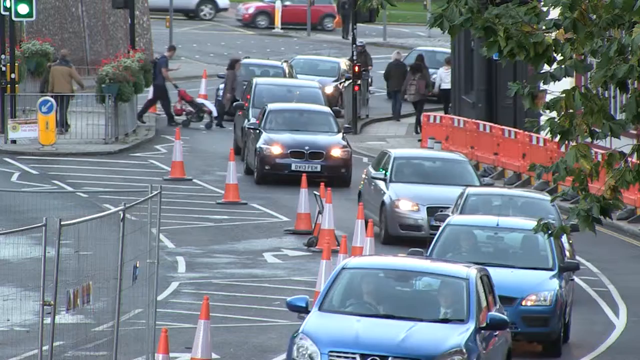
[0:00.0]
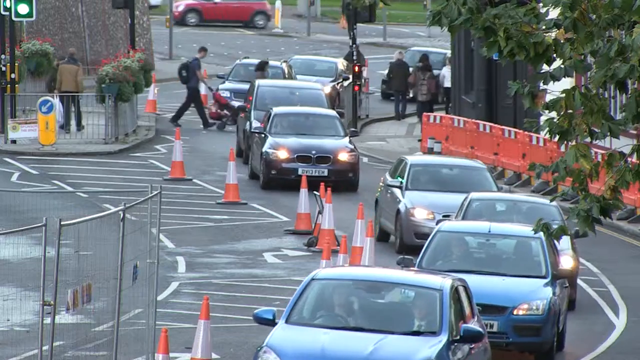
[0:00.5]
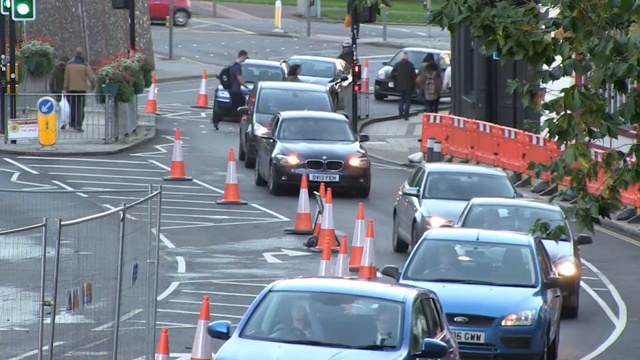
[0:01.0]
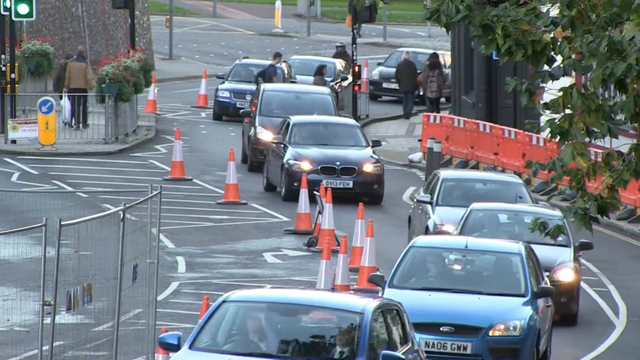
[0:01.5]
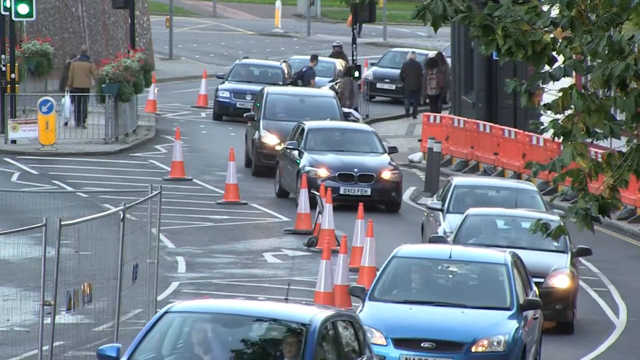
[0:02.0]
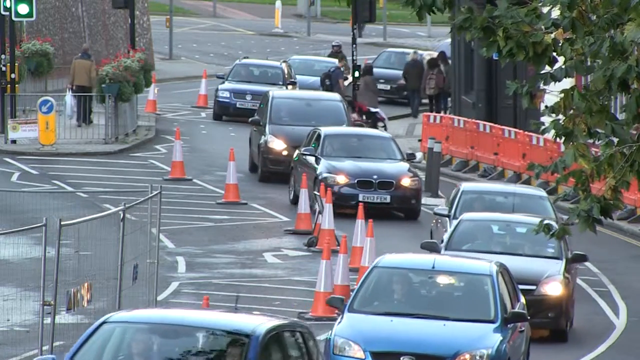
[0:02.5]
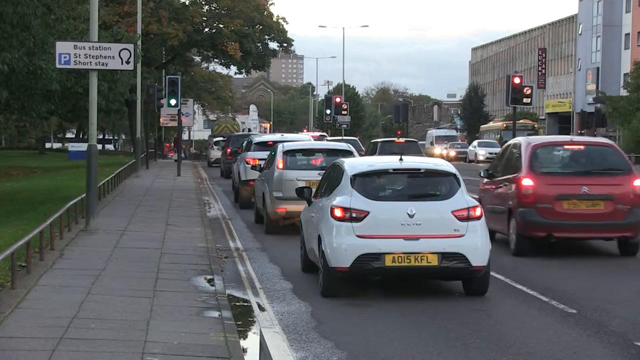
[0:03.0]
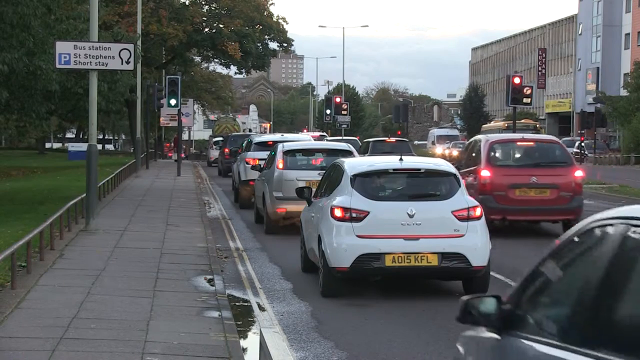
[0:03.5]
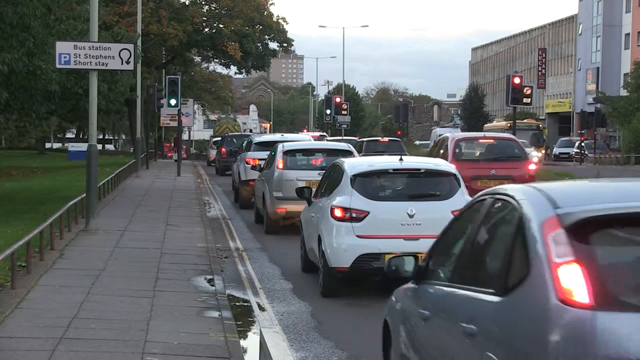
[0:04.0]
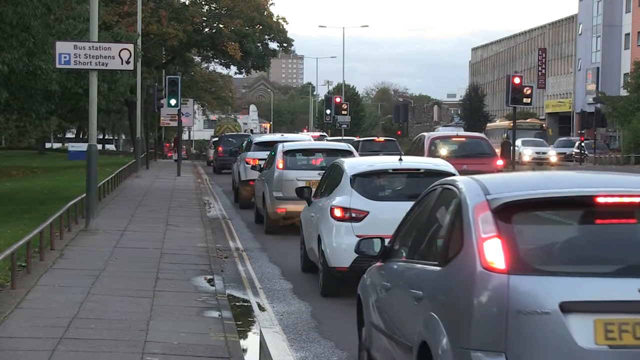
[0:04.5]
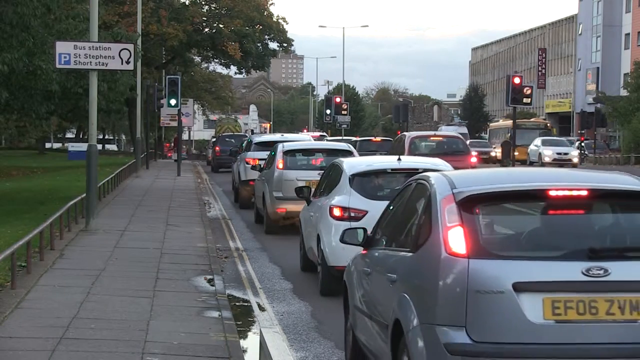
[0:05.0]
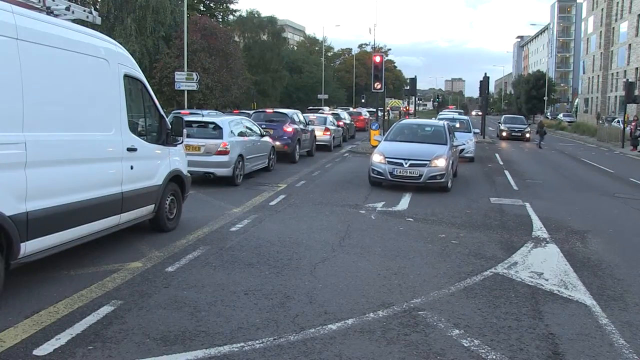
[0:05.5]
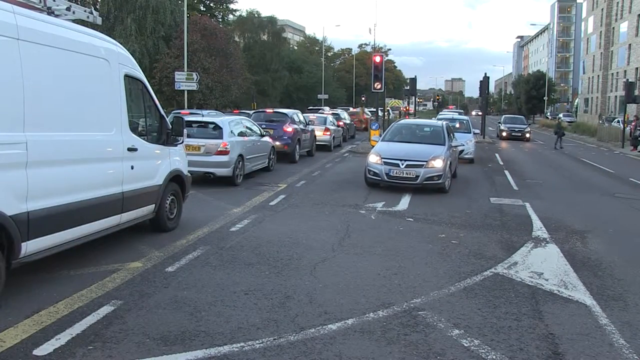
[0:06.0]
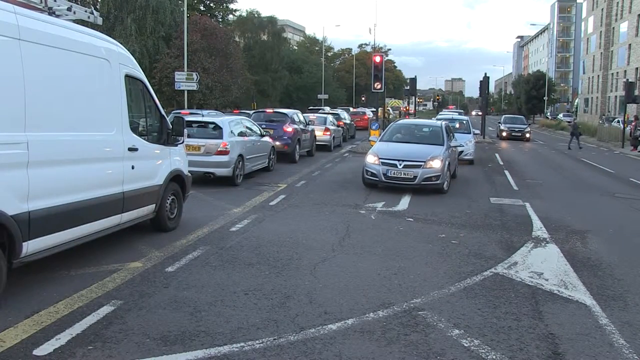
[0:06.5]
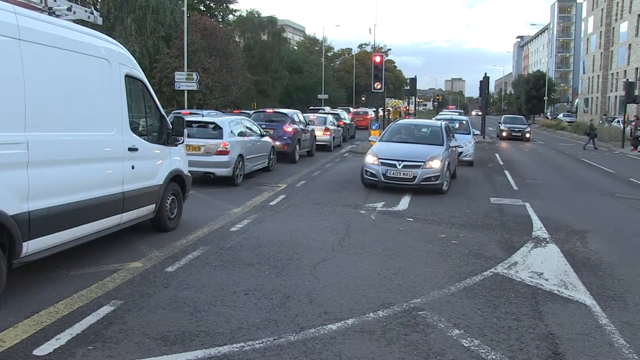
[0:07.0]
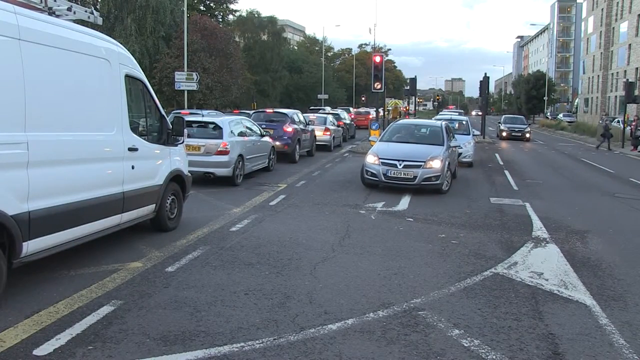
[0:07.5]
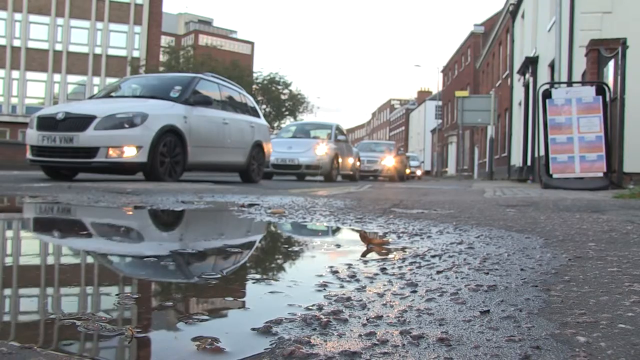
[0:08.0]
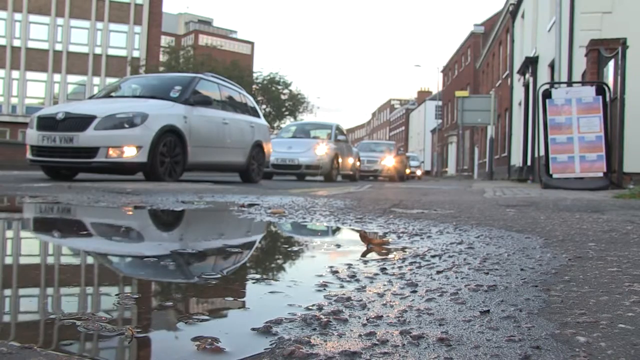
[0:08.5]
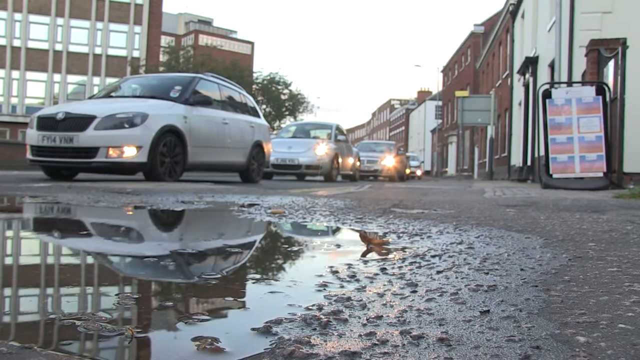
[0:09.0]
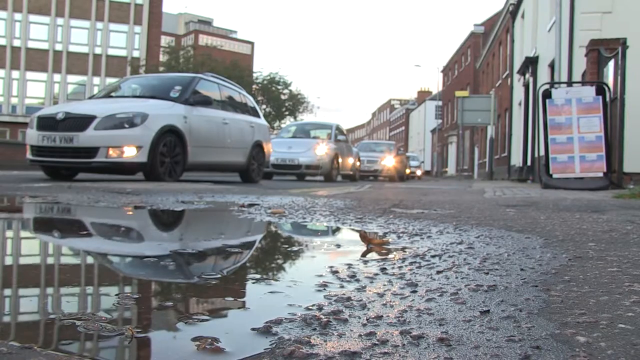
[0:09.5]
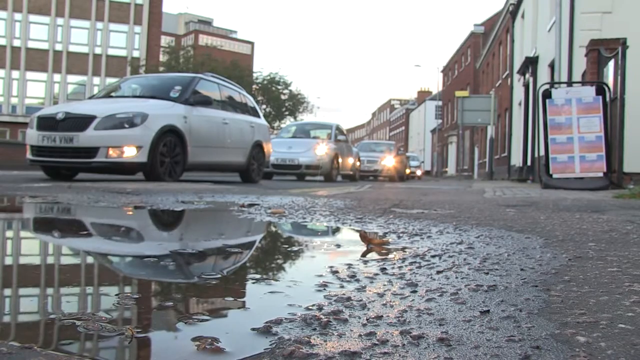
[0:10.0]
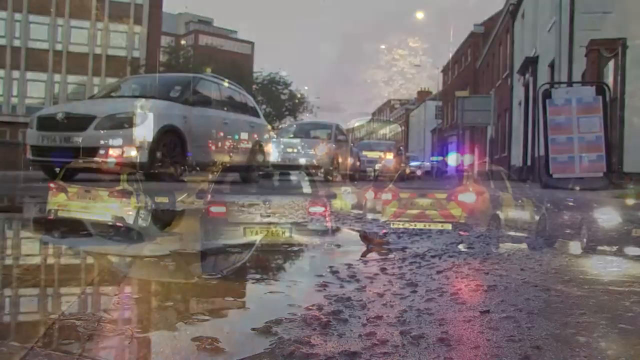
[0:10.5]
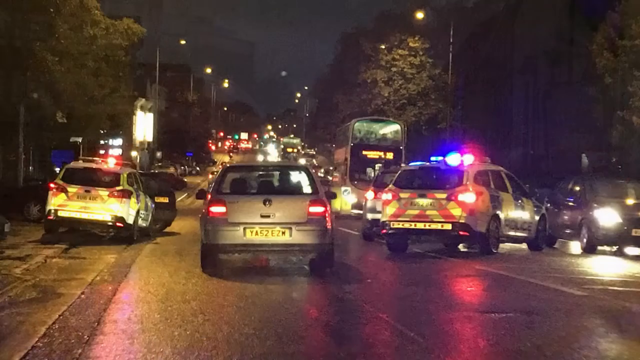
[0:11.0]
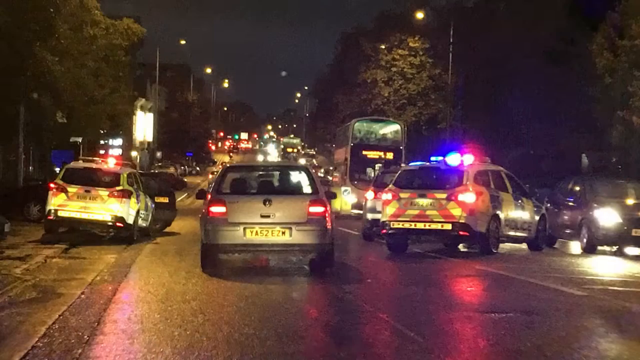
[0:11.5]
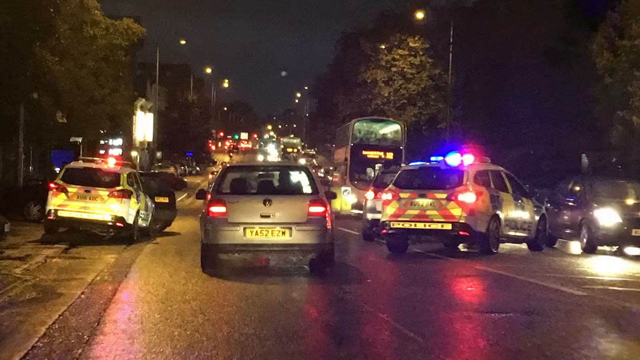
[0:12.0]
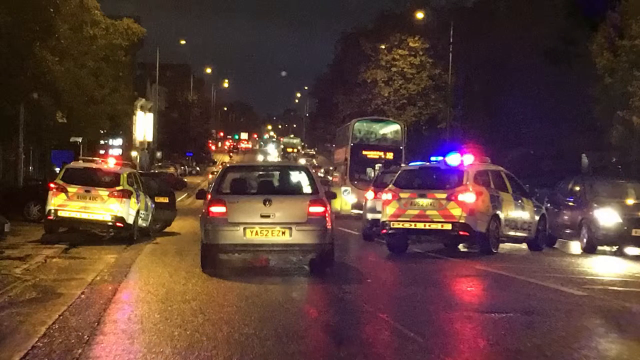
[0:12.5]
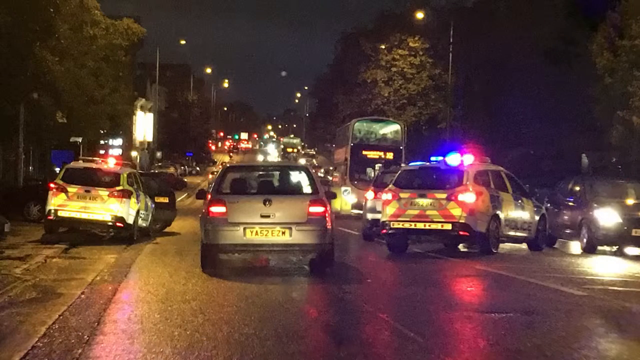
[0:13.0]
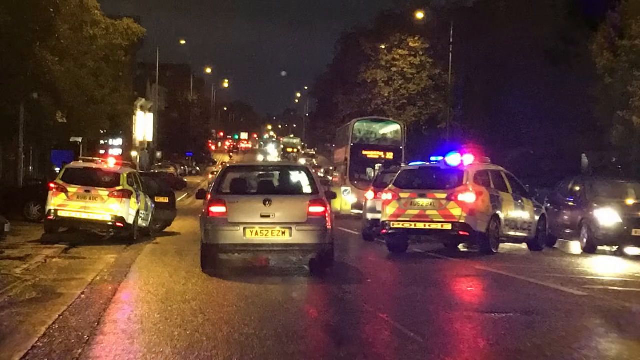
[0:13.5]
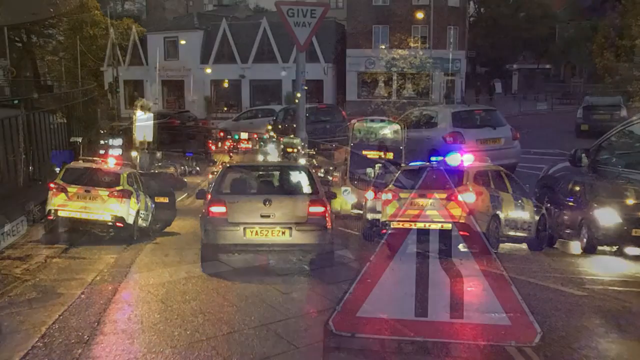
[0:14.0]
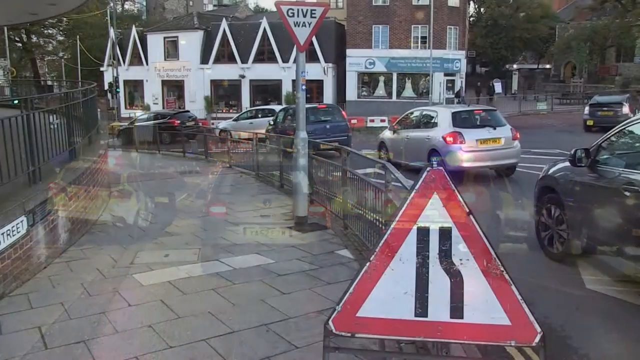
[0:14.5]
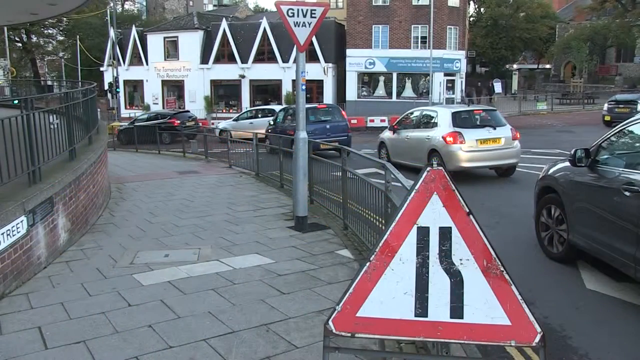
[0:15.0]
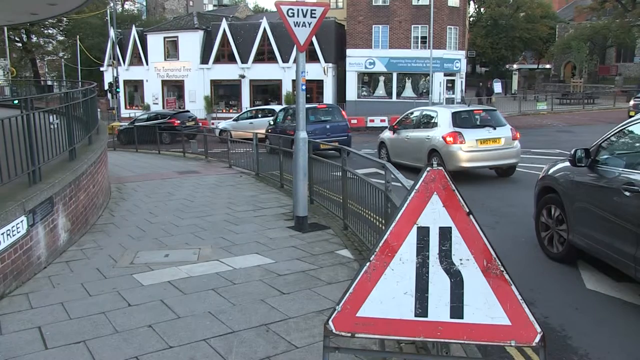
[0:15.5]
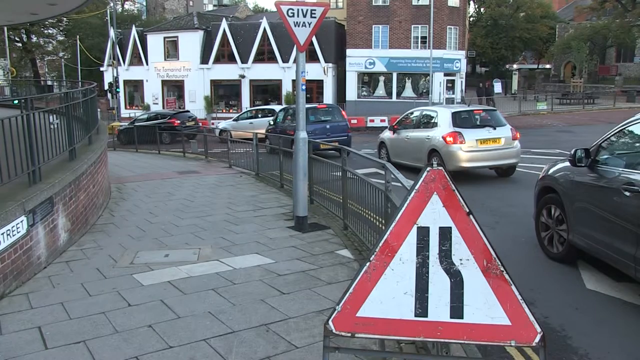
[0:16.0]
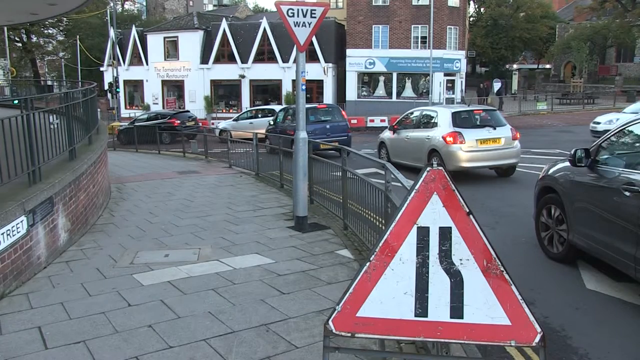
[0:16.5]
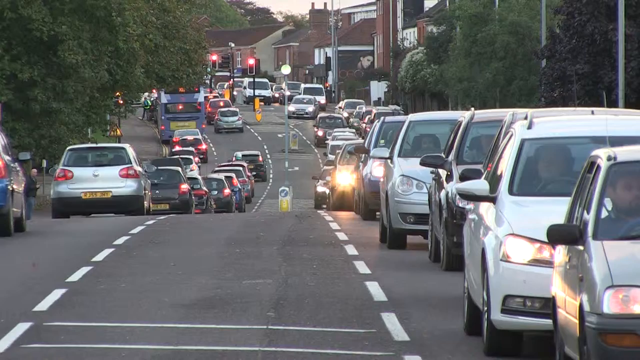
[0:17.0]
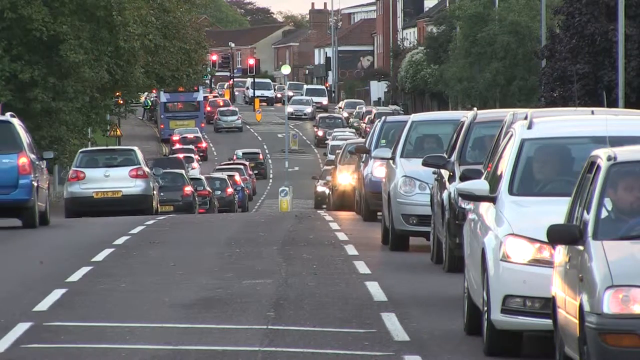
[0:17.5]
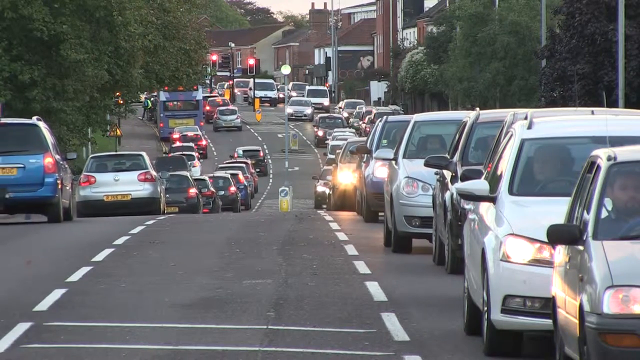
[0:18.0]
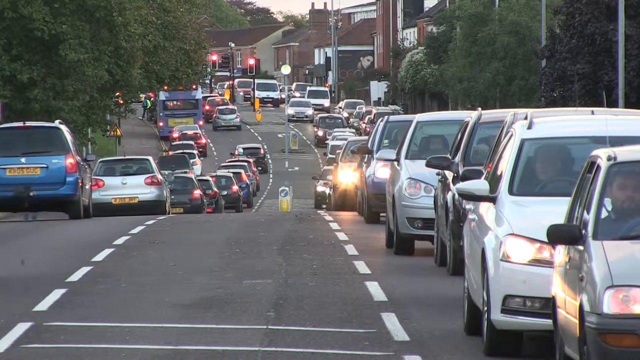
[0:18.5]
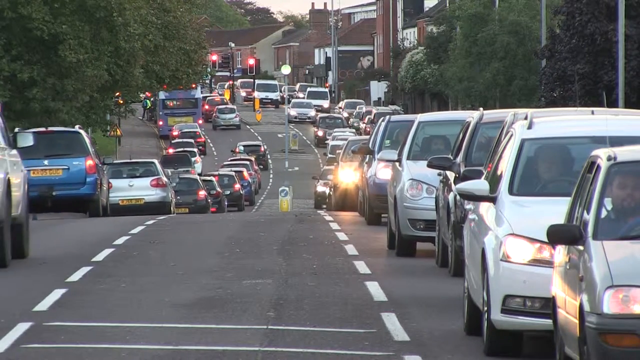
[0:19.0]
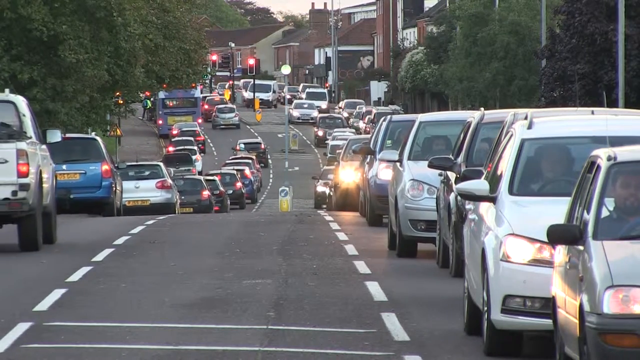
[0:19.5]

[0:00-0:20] Cars drive in a convoy along a tarred road with demarcations on the side, while pedestrians walk alongside; one pedestrian pushes a baby cart. The scene changes to a car parked on the side of the road near a park as other cars drive through and stop at a traffic light. An intersection and the buildings alongside the road are shown, along with several more cars. It is evening, with lights everywhere, and the camera pans back to show traffic lights. A sign reads "give way" as cars drive along that route. Cars drive through a two-way street.